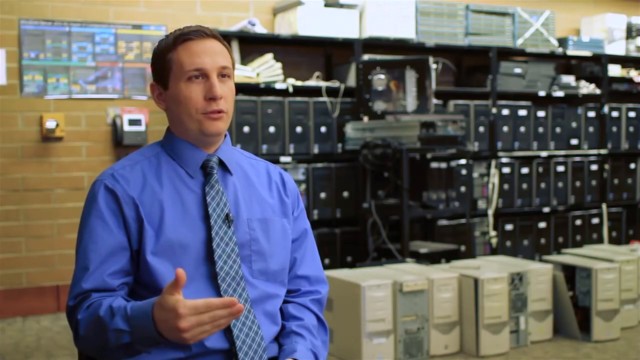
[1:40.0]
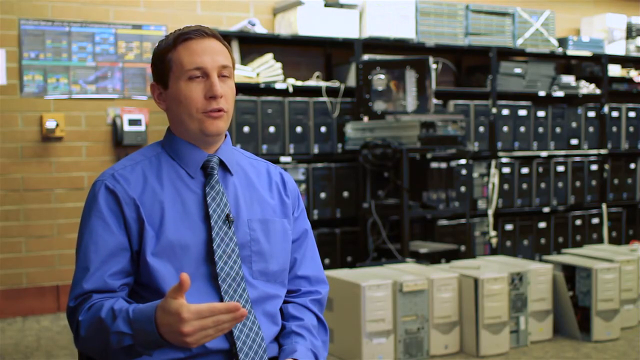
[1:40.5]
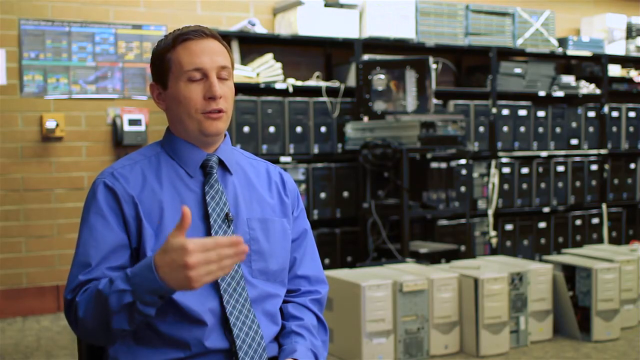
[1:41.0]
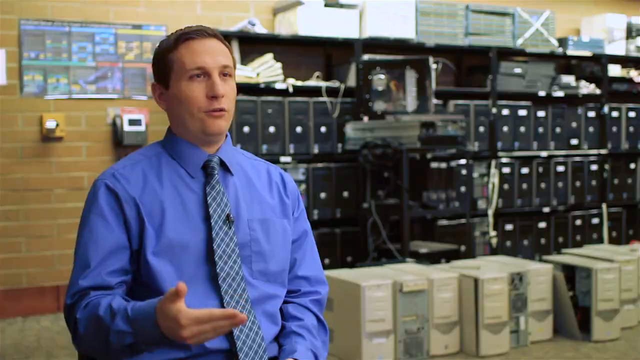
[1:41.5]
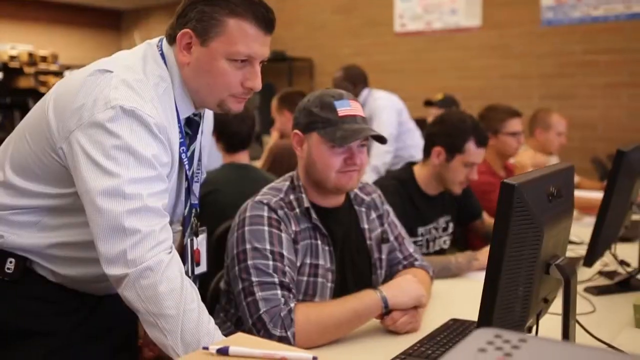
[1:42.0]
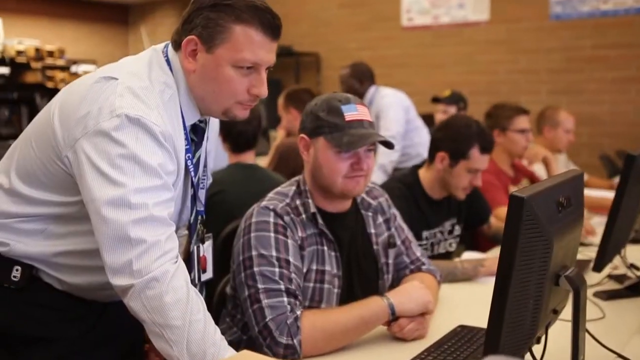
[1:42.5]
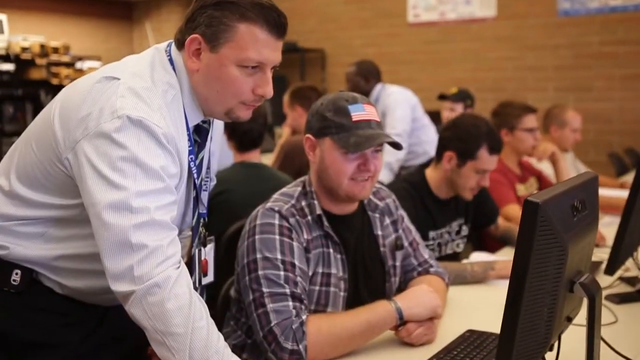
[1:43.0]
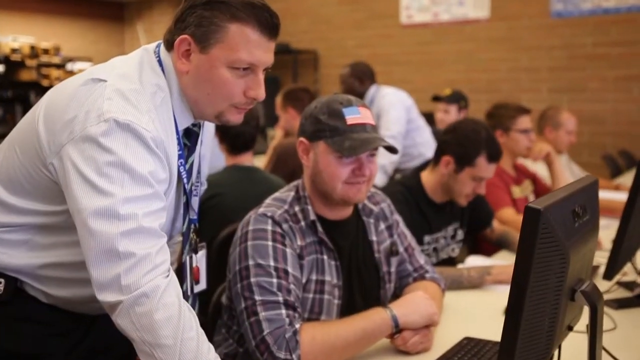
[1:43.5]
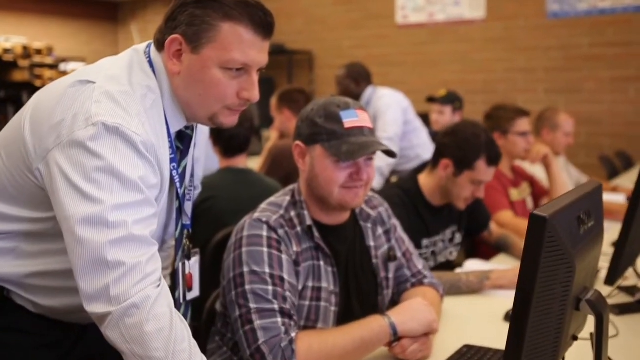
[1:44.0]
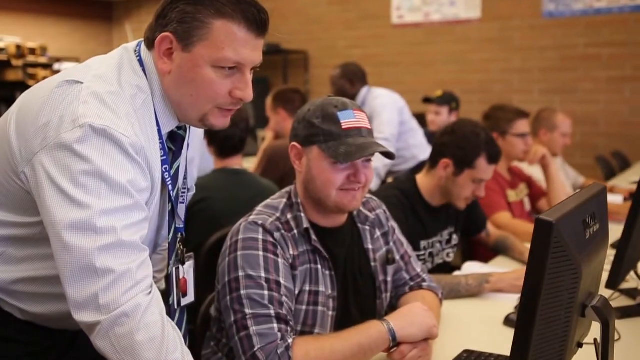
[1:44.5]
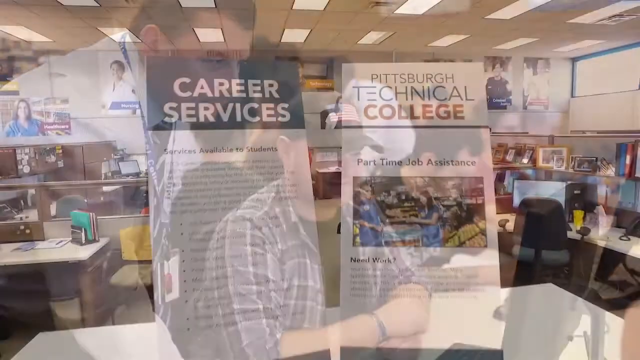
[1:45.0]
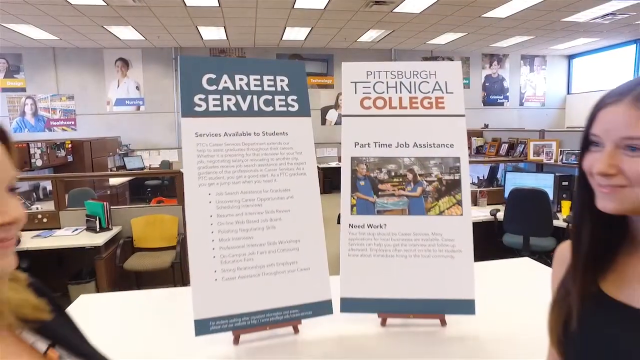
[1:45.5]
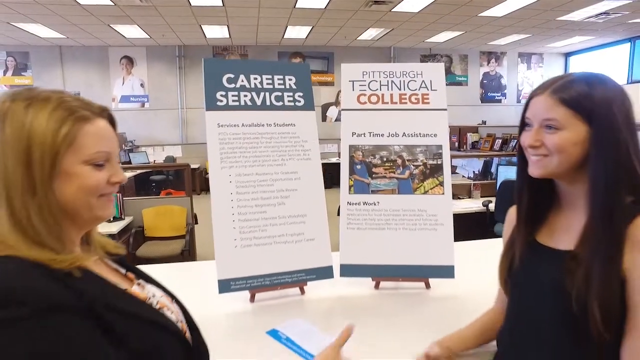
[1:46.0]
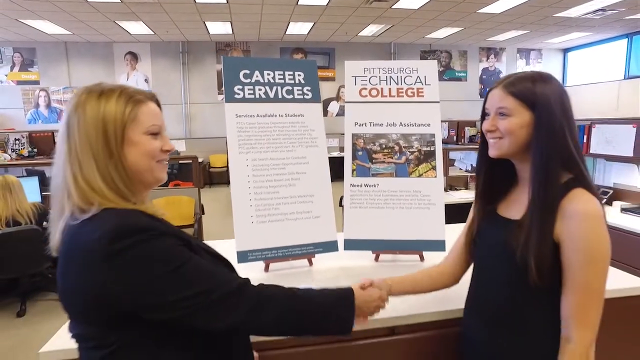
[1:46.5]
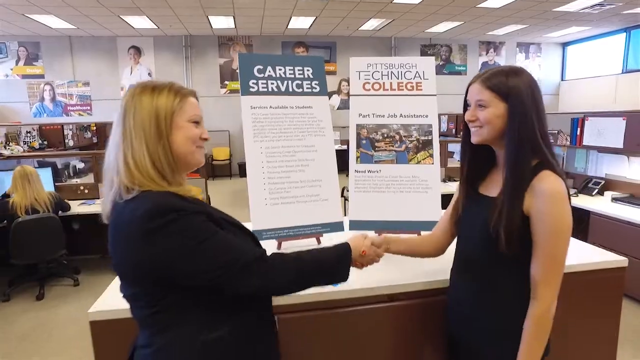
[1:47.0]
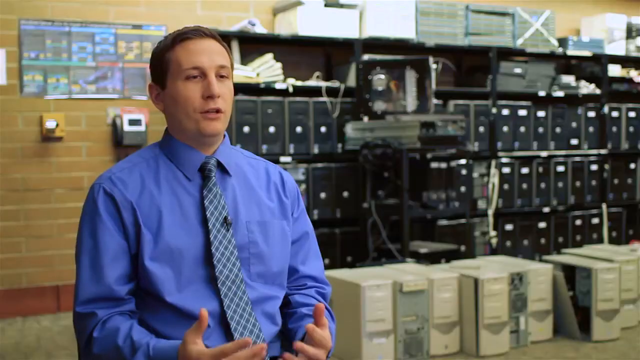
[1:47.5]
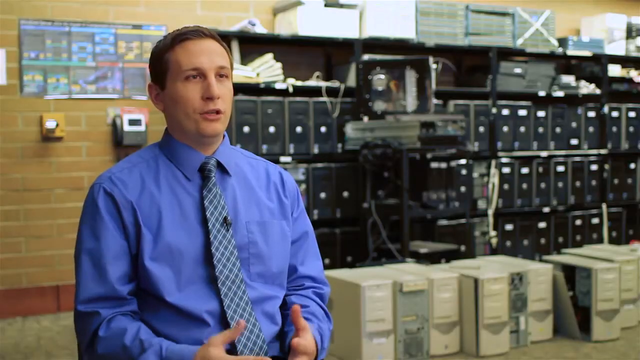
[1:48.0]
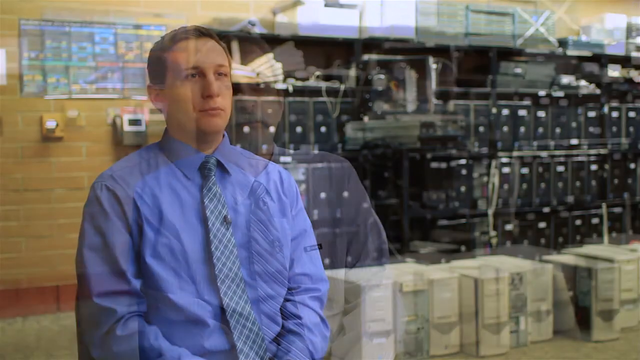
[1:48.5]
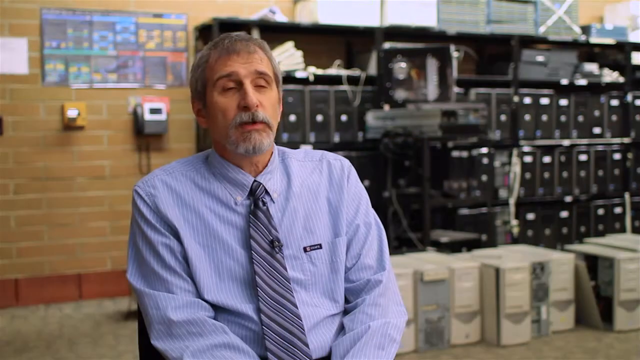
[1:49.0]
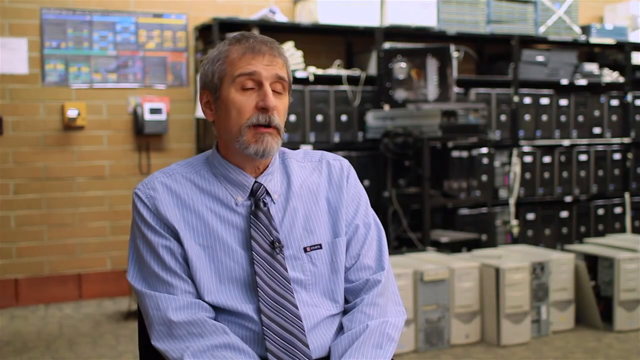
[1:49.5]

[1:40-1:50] More instructors stand and help people. Another instructor is shown: a Caucasian man, a little bigger, in a white button-down shirt with a blue lanyard around his neck, a small goatee and brown hair, probably about 50. Two women shake hands at what looks like maybe some kind of job fair; behind them are two signs on easels on a tabletop, one reading "career services" and the one on the right reading "Pittsburgh Technical College part-time job assistance". The video returns to the instructor in the deeper blue shirt talking to the camera. Both interviewed men are left of center when talking to the camera, looking a little off to the right in a three-quarter view, with a tan brick wall like one inside a school to the left behind them and computer and electronic equipment to the right.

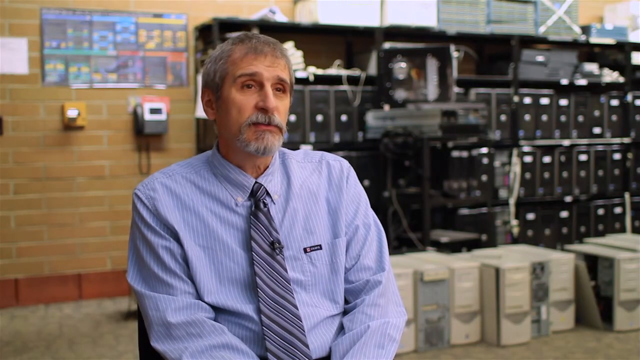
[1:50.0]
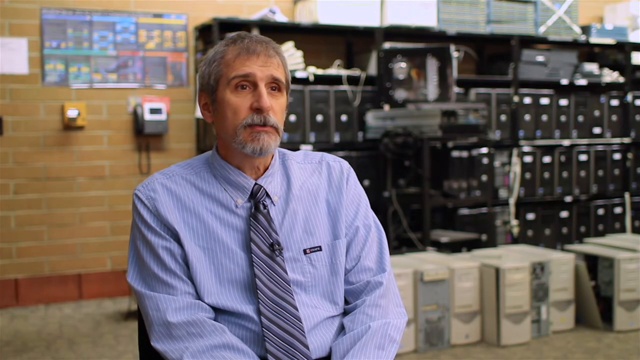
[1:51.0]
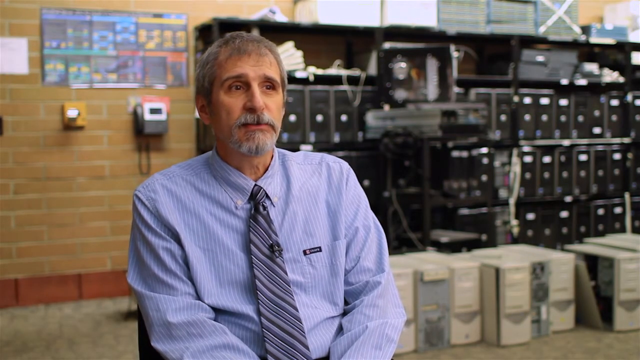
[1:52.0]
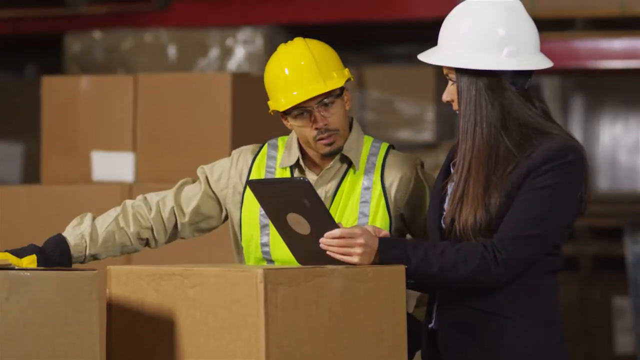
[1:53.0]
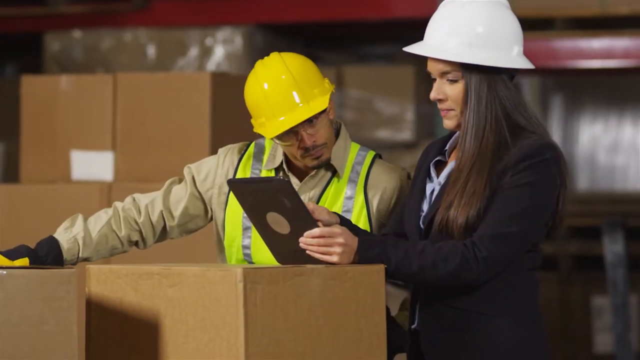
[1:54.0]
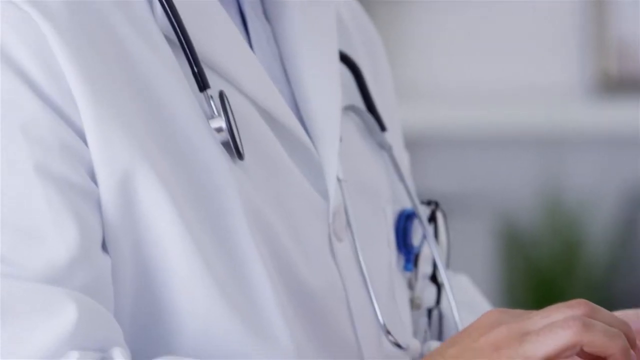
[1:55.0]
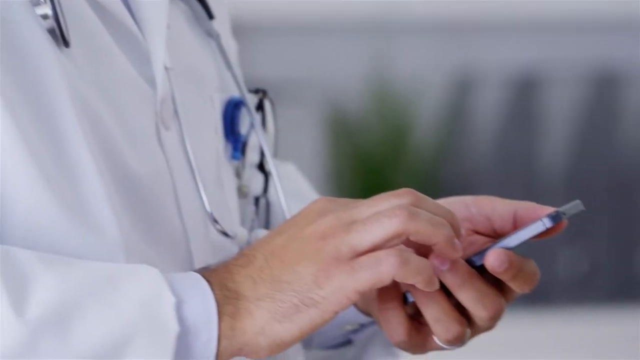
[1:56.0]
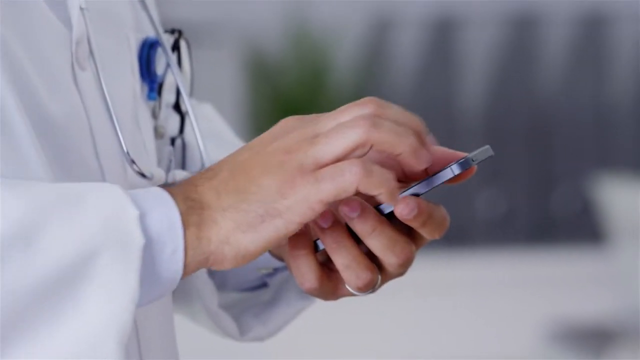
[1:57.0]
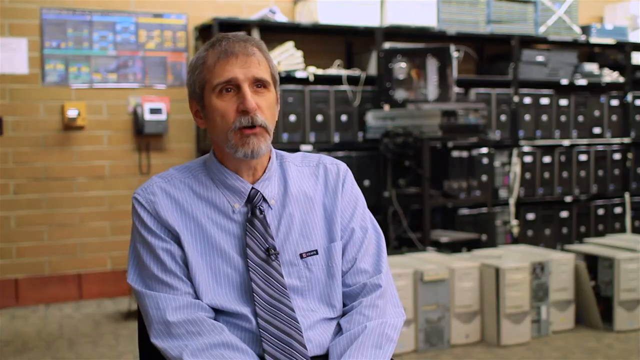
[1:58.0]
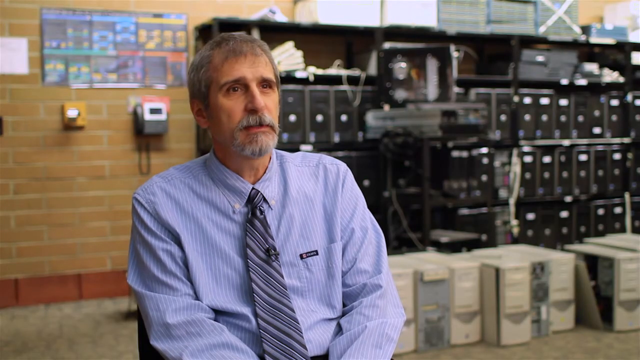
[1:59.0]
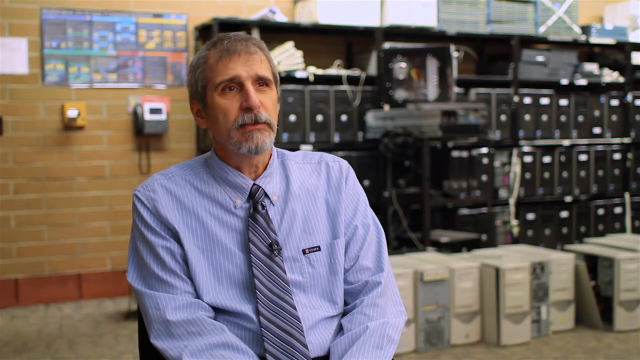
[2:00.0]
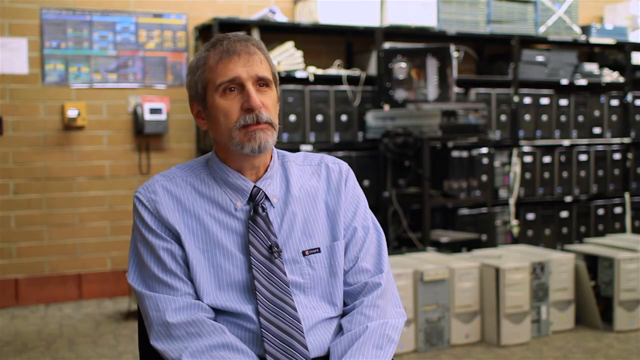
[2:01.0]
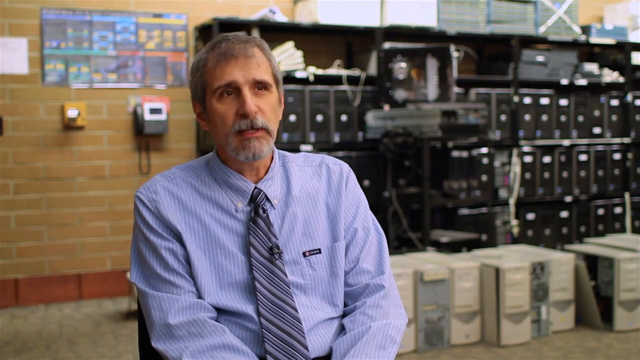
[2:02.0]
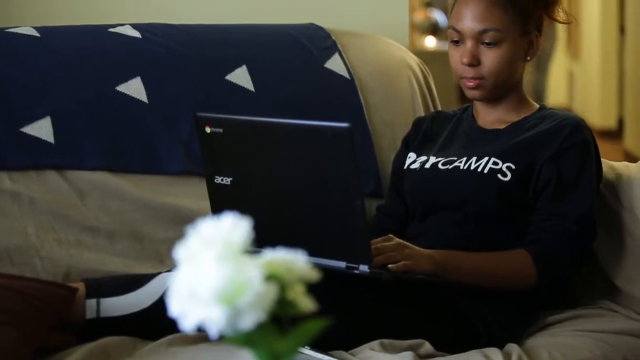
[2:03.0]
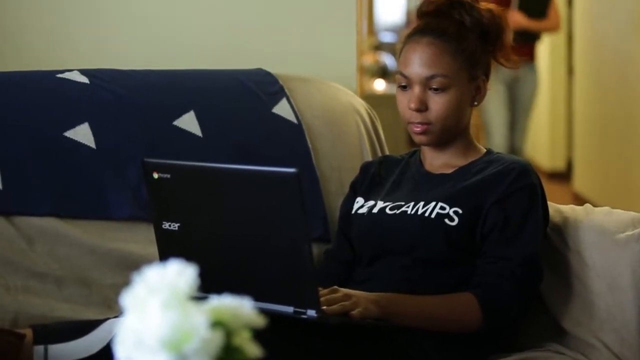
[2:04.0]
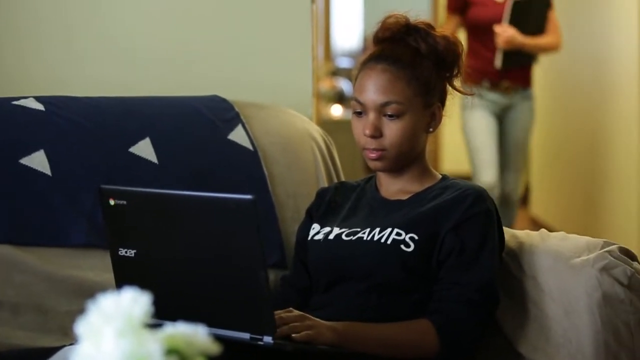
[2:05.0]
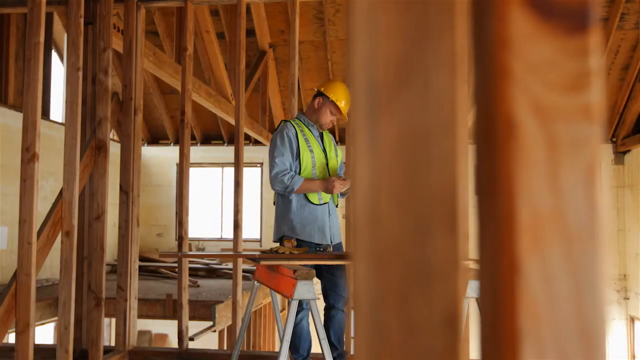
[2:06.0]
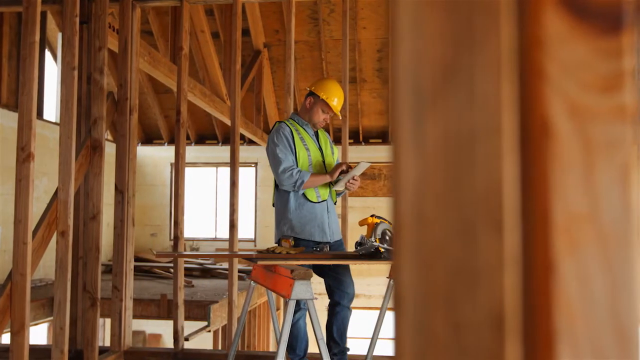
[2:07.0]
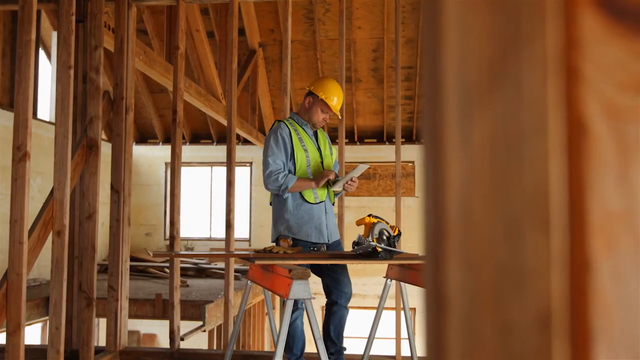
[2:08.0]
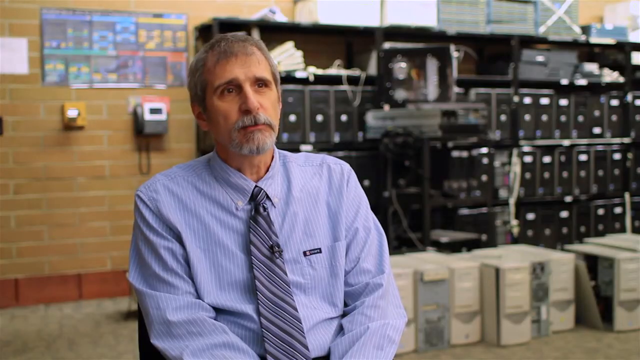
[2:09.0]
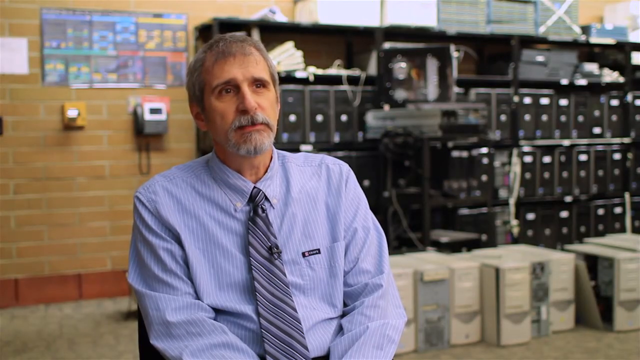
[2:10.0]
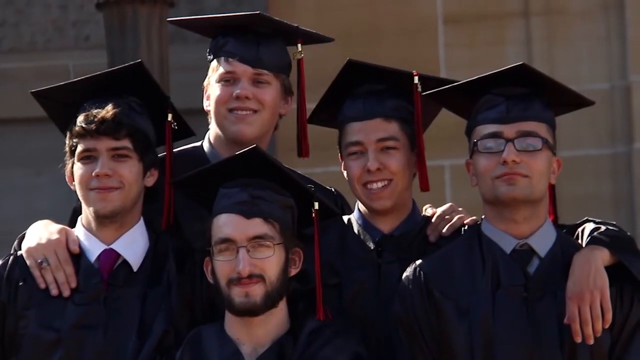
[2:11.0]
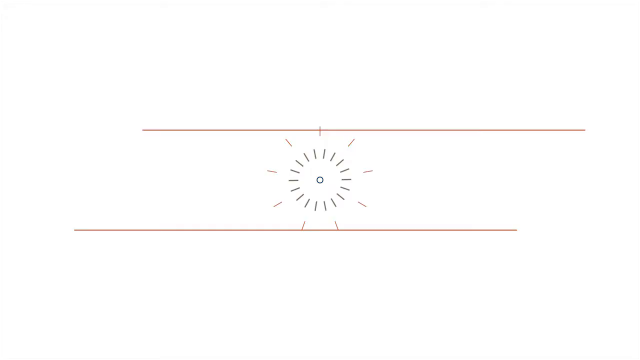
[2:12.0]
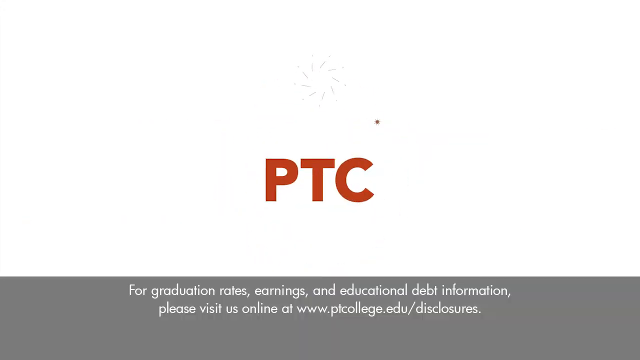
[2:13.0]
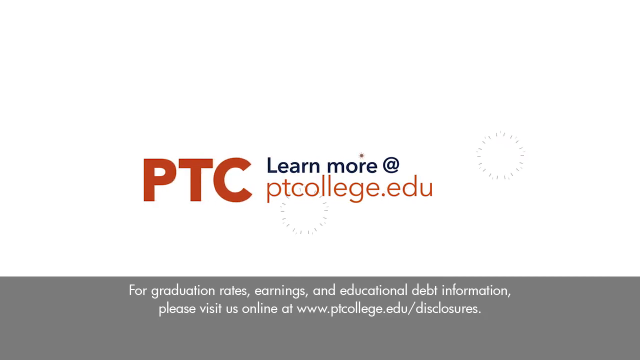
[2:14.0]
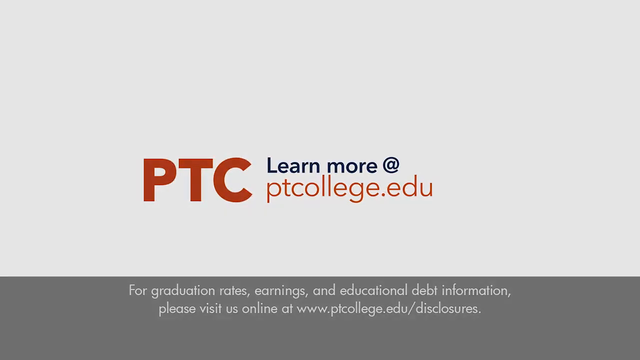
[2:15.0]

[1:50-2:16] Two people wear hard hats, one yellow and one white. The one in yellow has a green safety vest over a tan button-down; the one on the right is a woman with long brown hair in a long-sleeved black blazer, holding a clipboard, and they talk to each other. Next is a doctor in a white lab coat with a stethoscope around his neck, holding a phone in one hand and touching it with the other. Roger appears again giving commentary. A young black woman with her hair pulled up in a bun, wearing a black T-shirt with white writing across the chest, is in her home, apparently sitting on a couch with a laptop on her lap; a woman whose head is not visible walks behind her, also holding a laptop. In a construction setting, a man in a green vest and yellow hard hat is in an unfinished, framed home. Roger appears again. Five smiling young men stand with their arms around each other, all wearing graduation caps with burgundy tassels. The ending graphic returns to the same PTC logo from the beginning, this time moving to the left and to the right, and reads "learn more at ptcollege.edu", with "ptcollege.edu" in orange, "PTC" still in red and the rest in black. At the bottom, a text box that looks gray holds white text in the middle, apparently about graduation and debt information.